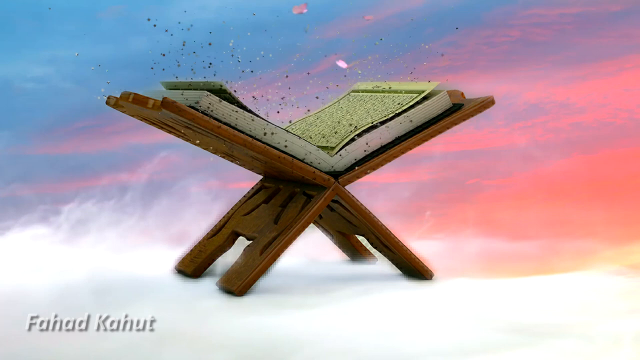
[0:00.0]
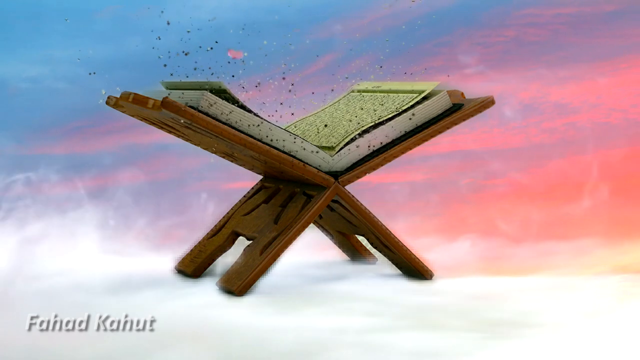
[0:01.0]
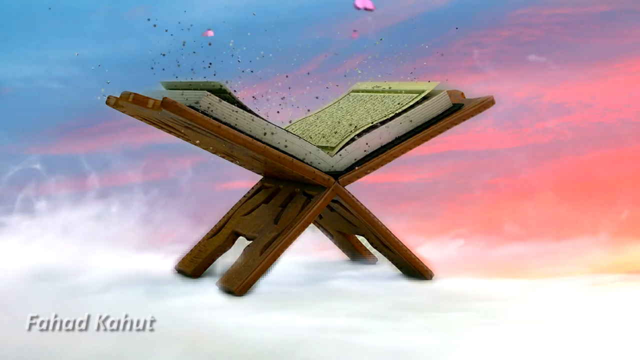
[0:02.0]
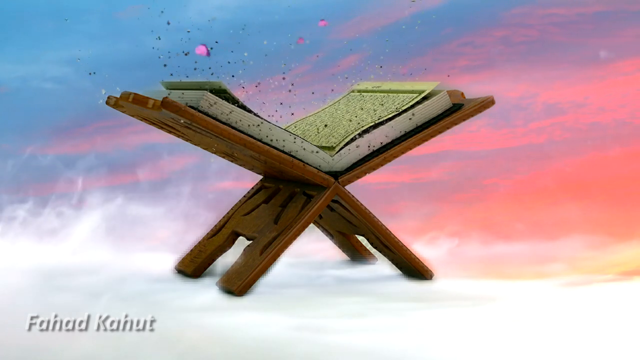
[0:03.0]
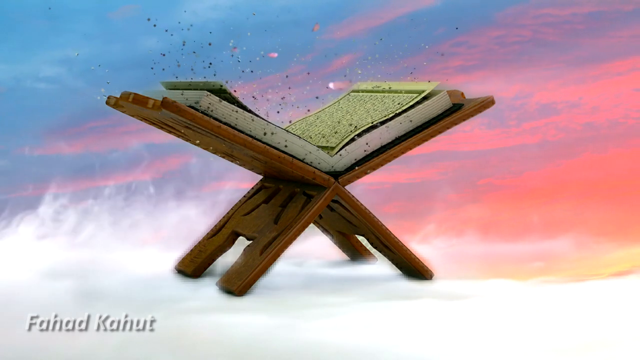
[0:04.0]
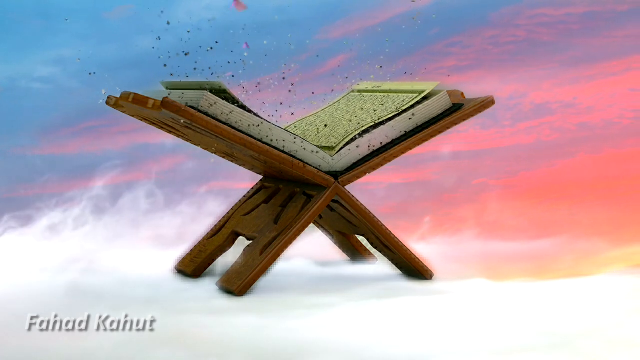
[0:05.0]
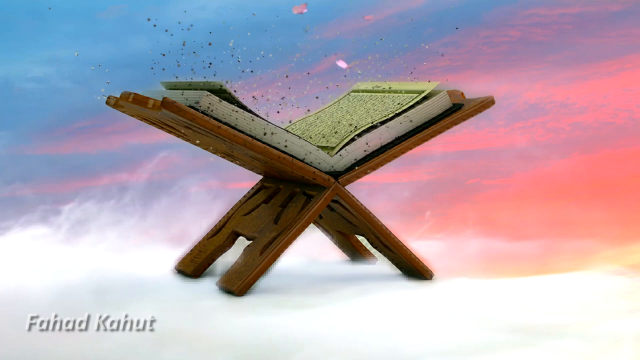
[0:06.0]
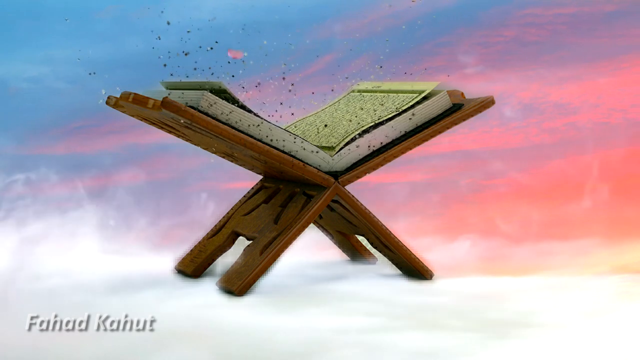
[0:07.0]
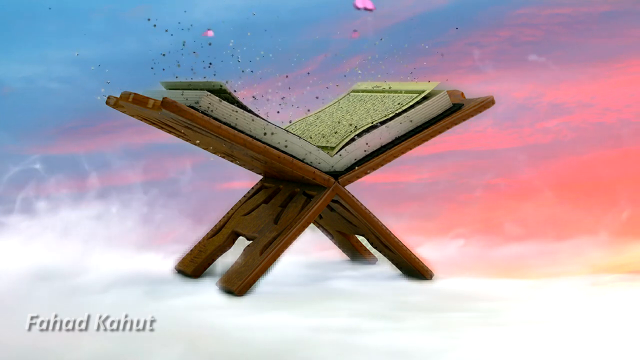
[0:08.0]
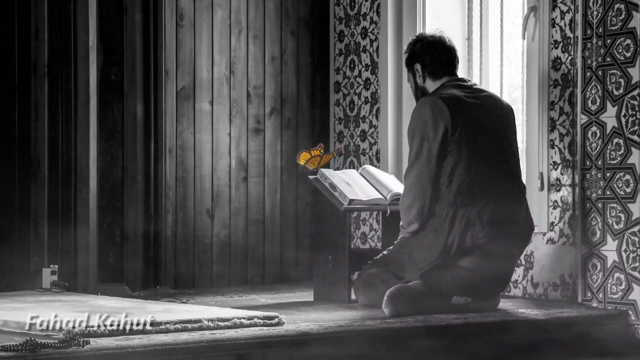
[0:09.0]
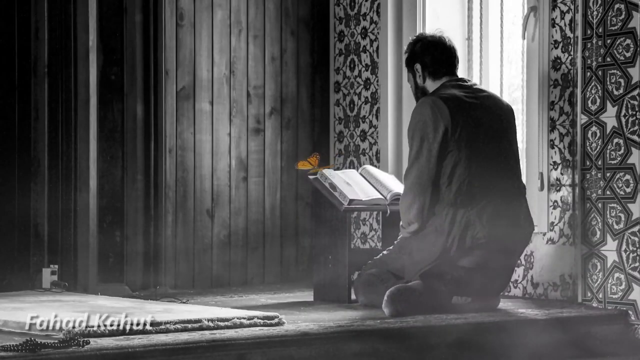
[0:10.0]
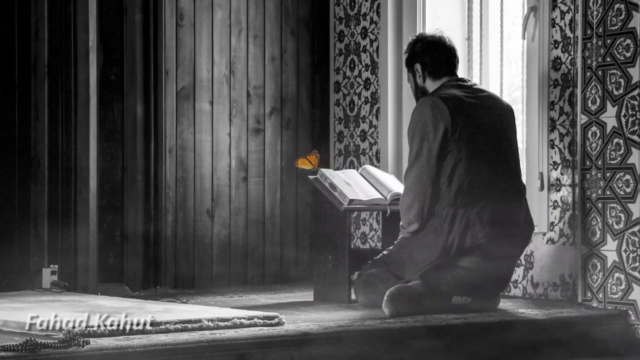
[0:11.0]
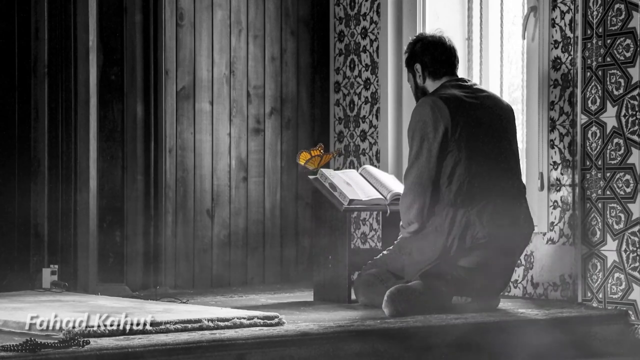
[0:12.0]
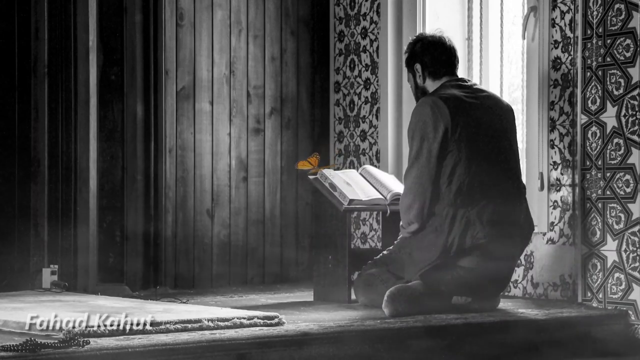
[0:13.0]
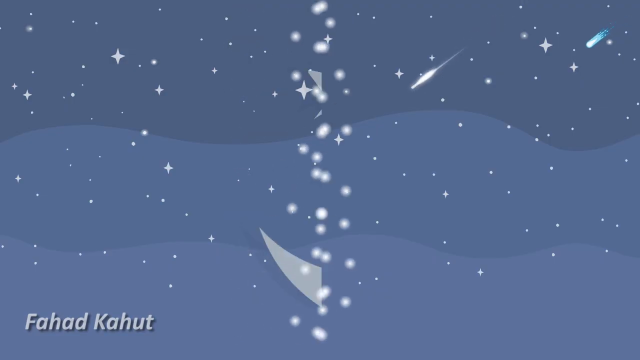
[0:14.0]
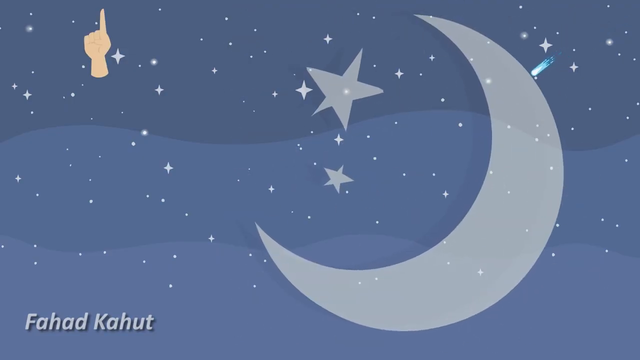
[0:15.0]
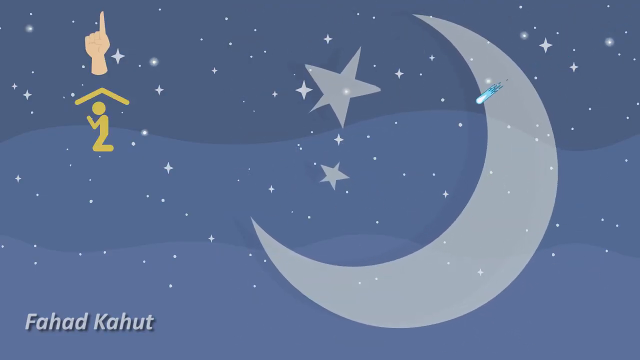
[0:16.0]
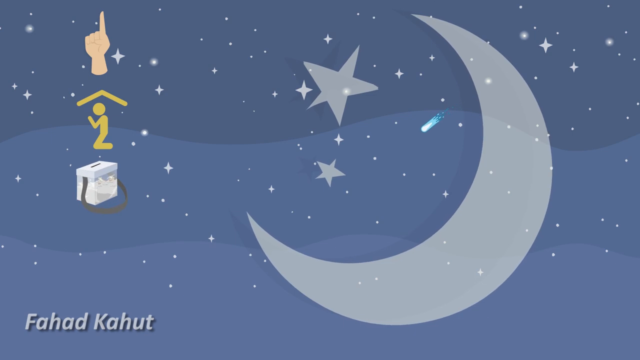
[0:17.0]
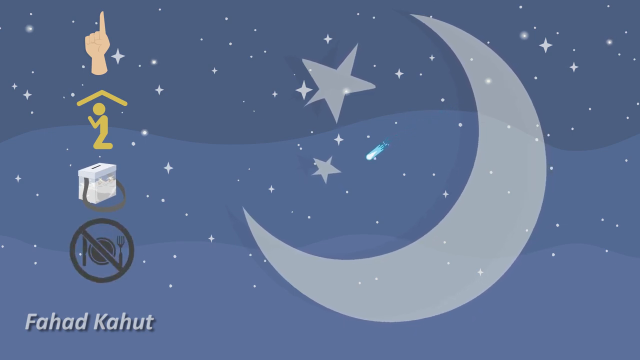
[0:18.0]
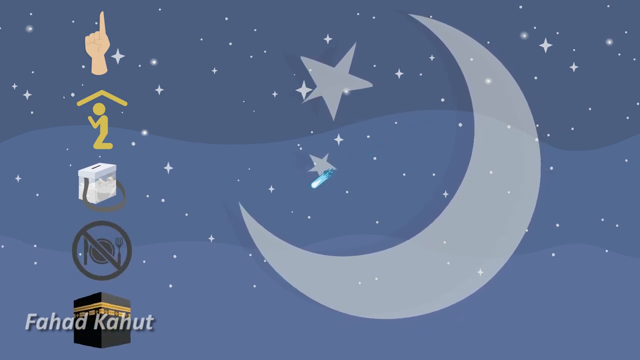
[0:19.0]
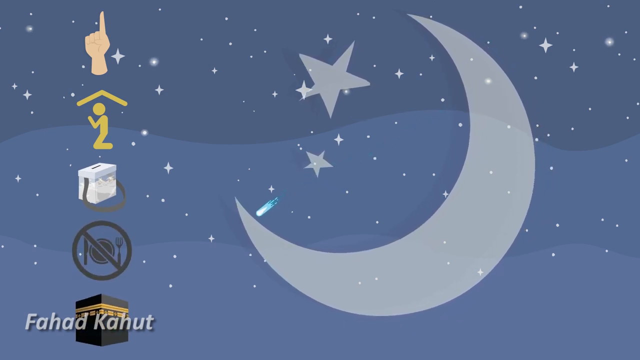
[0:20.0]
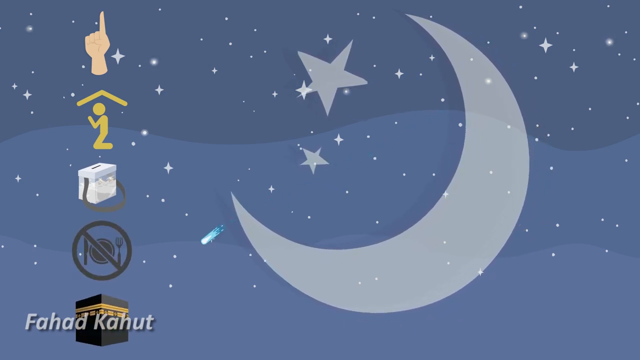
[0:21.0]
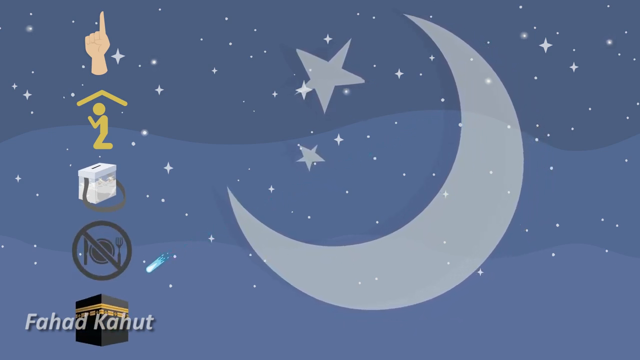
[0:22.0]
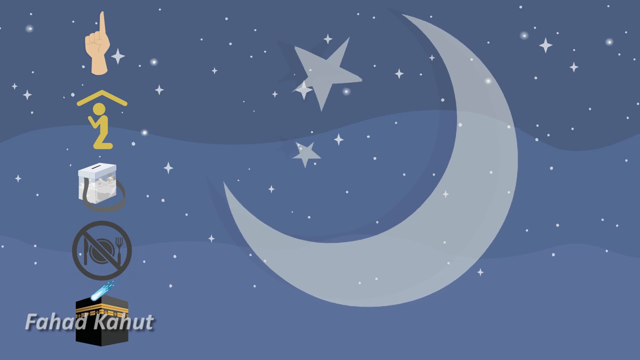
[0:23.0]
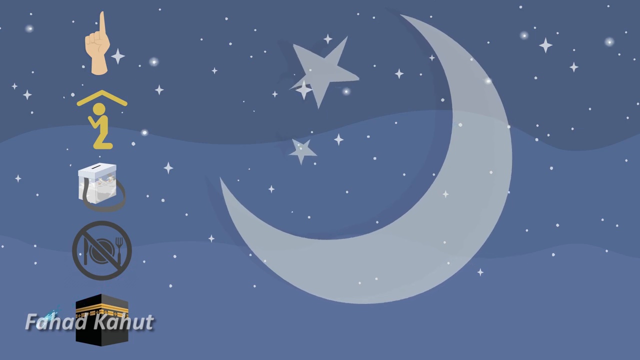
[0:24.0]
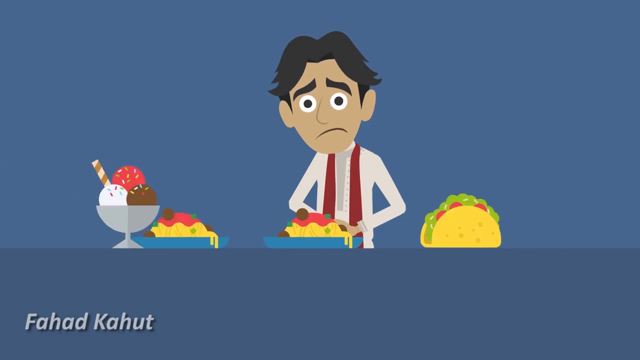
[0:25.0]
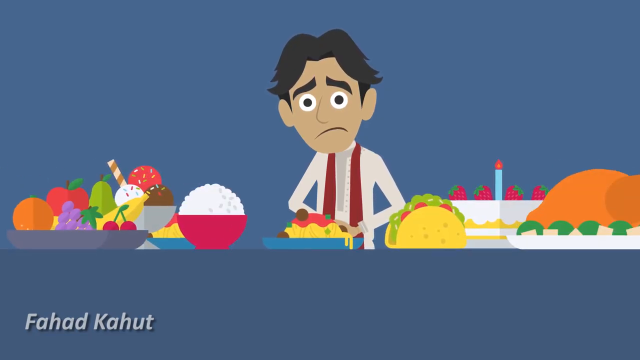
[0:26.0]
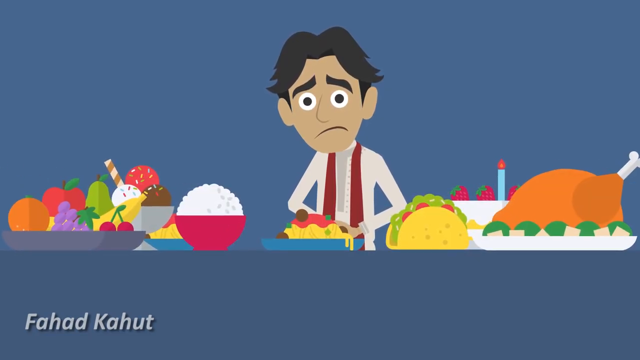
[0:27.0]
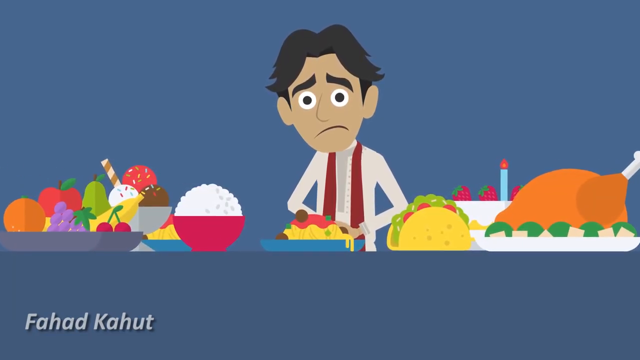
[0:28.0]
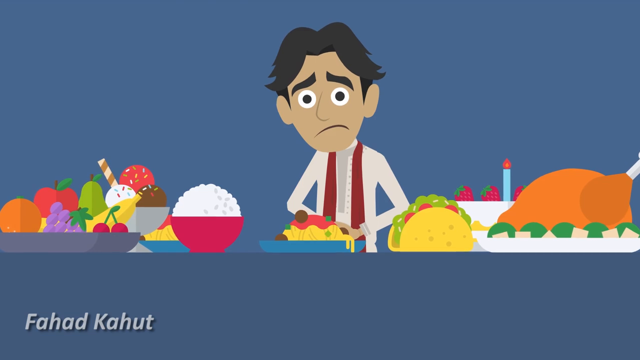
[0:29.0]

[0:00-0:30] A Qur'an rests on a brown wooden book holder. In the background are clouds and what seems to be a sunset, appearing red, and butterflies move around on the Qur'an while some animation plays in the background. The next scene shows a man with his back to the camera, on his knees, holding and reading a Qur'an. The image has a black-and-white hue with no color visible, except for a colorful butterfly sitting on the Qur'an. Next, a star and moon appear along with a sign of prayer, a sign of no food, and two other signs on the screen, while star lights move and stars appear in the background. The camera then pans to a cartoon man with food in front of him on the table: a cake, a burger, rice, ice cream and fruit. He doesn't seem too happy; he looks at the food but does not eat or touch it, and he has a smug face.